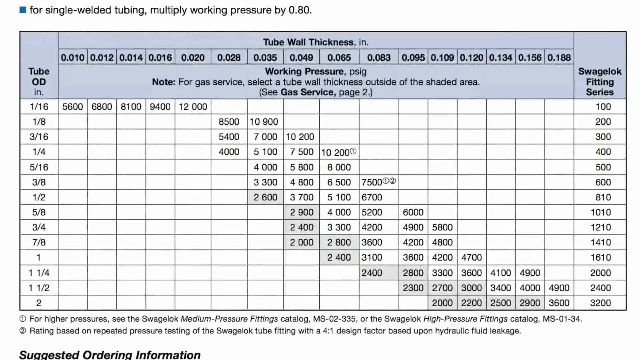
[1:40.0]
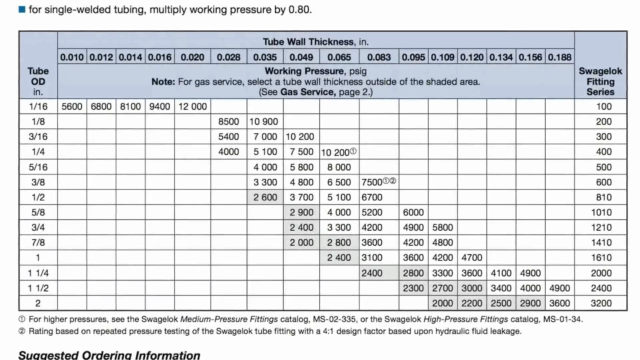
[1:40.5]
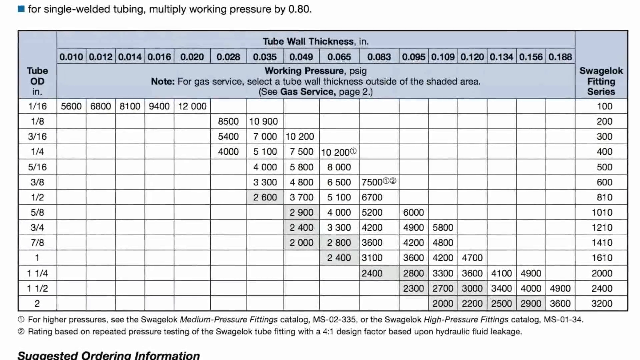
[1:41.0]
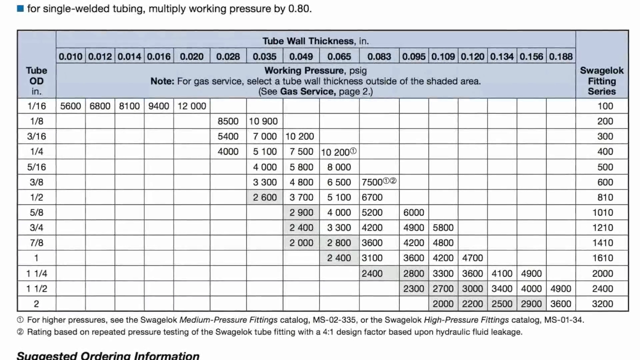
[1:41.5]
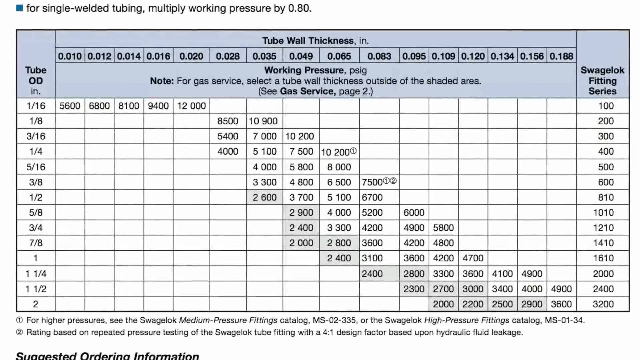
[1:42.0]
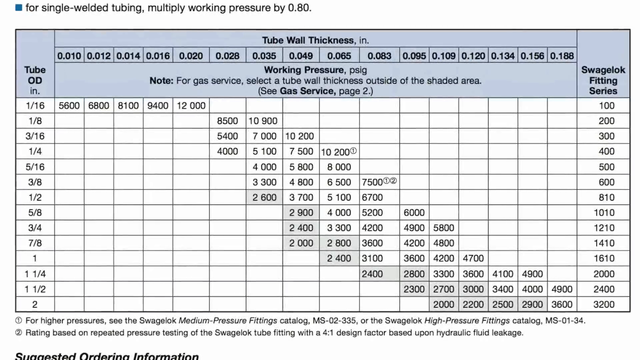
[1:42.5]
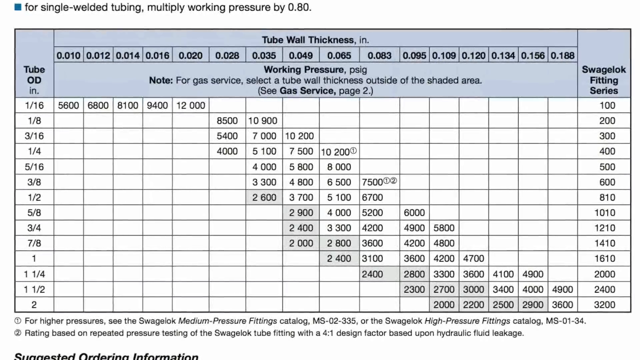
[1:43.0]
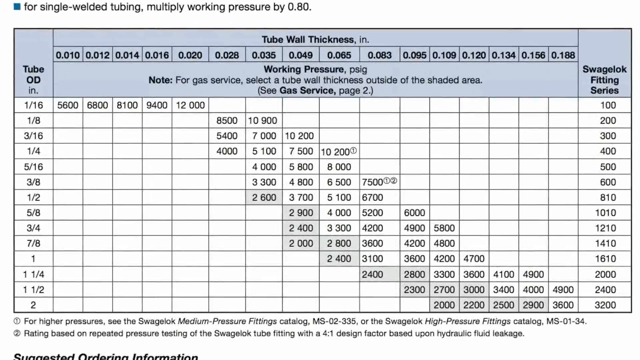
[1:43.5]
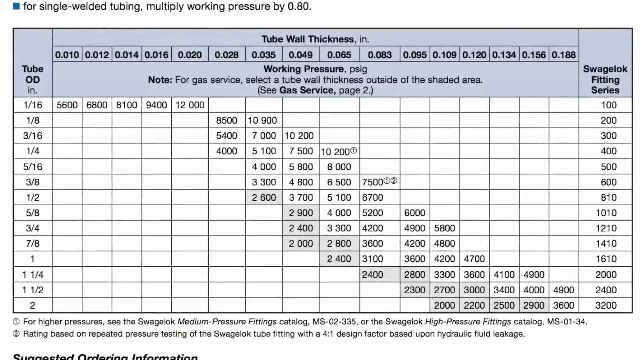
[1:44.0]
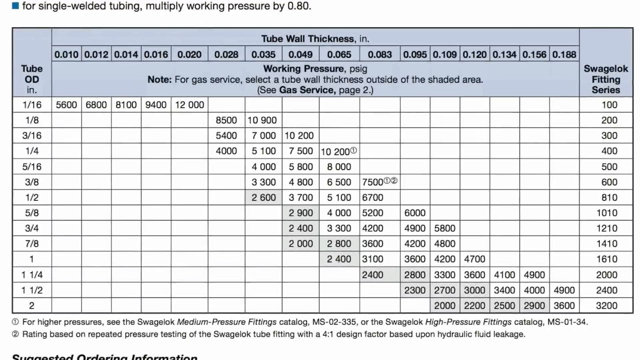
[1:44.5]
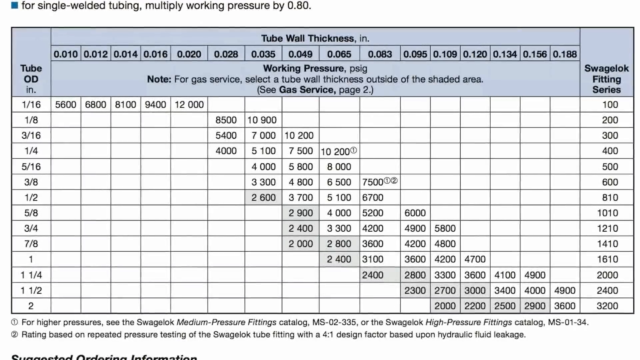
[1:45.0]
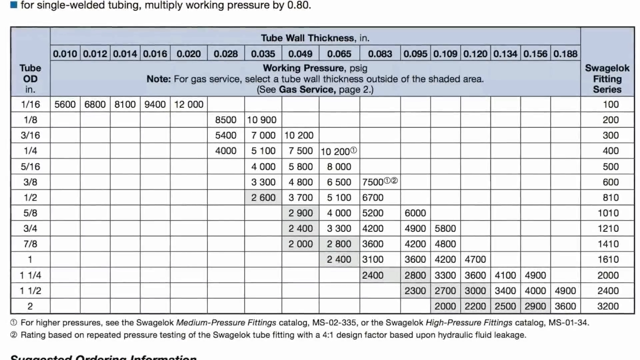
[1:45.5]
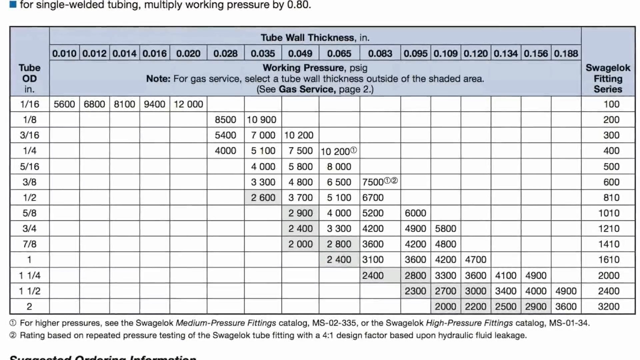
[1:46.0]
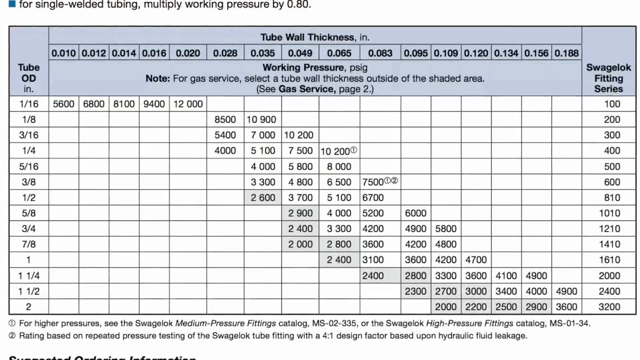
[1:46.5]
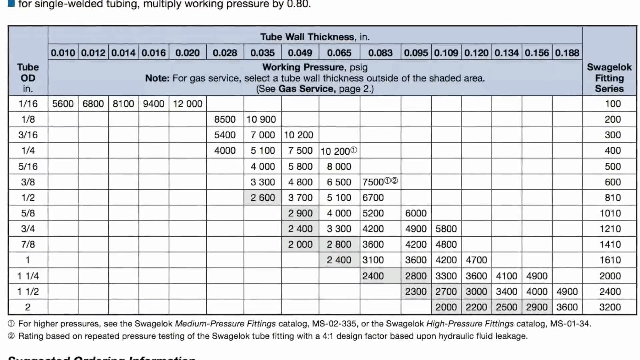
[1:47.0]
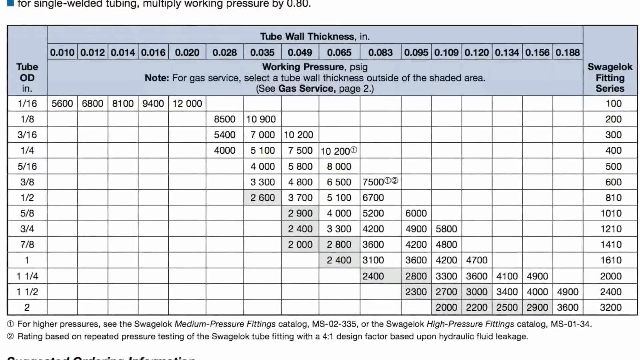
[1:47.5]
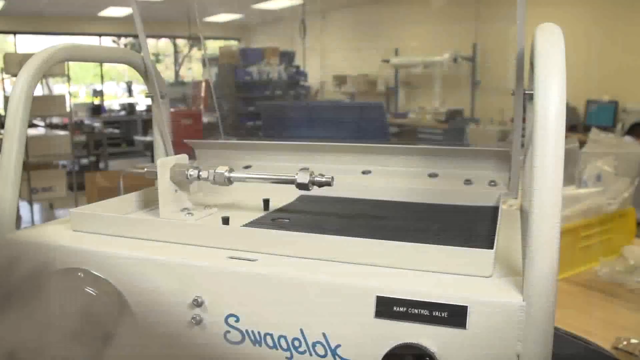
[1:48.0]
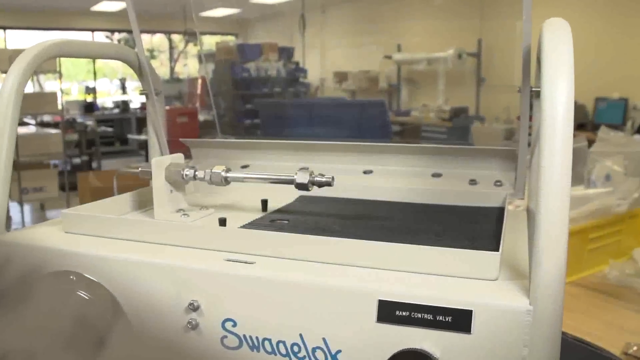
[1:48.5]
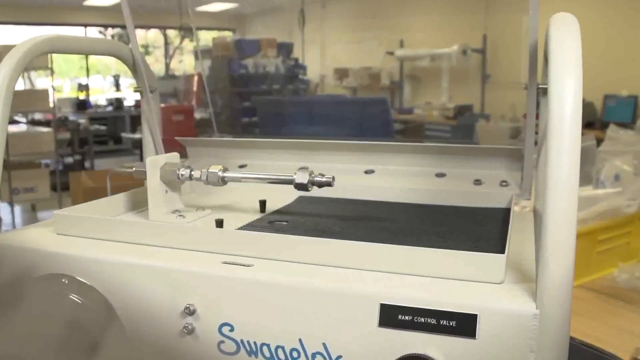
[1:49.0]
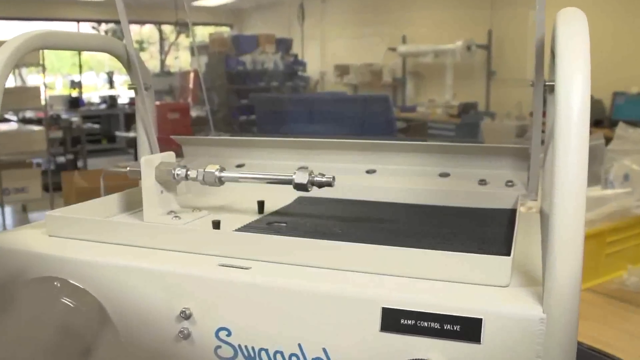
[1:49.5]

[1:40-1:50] The chart of the tubes' working pressure remains on screen. On the left it says "tube outside diameter", on the right "tube wall thickness", and on the far right "Swagelok fitting series". In the middle are many numbers showing how the diameter and wall thickness relate to the working pressure the pipes or tubes can handle. Going down the list, the pressure appears to increase as the outside diameter and wall thickness of the tubes increase.